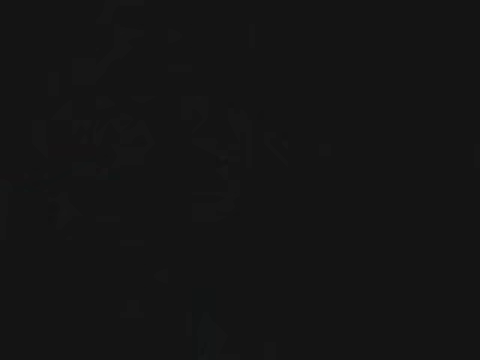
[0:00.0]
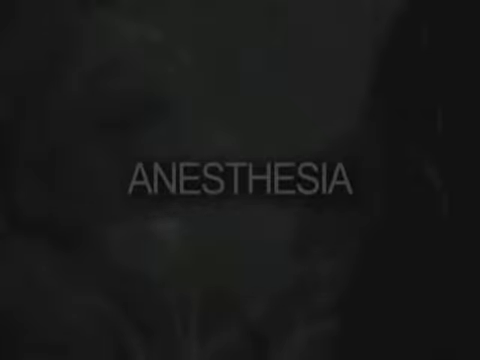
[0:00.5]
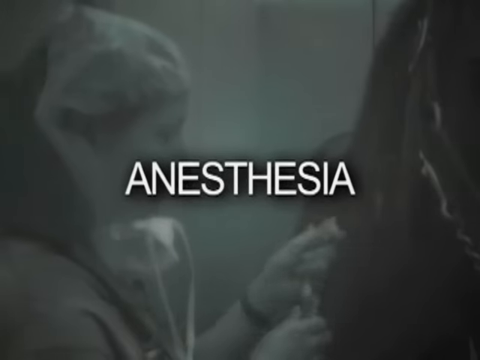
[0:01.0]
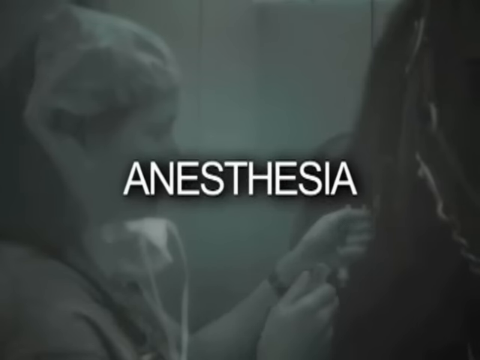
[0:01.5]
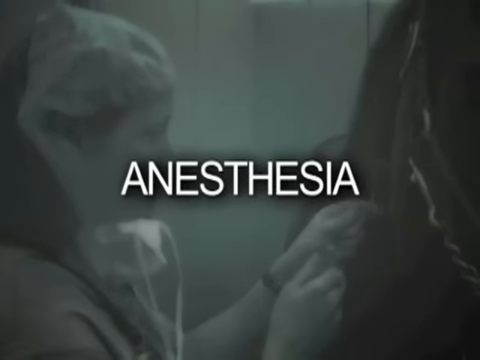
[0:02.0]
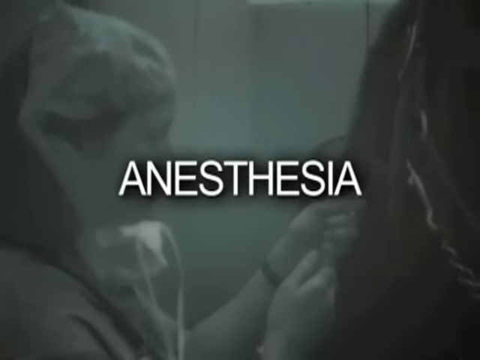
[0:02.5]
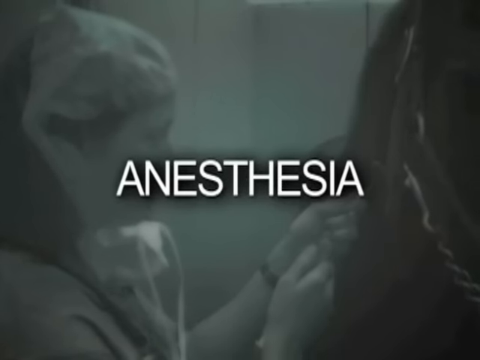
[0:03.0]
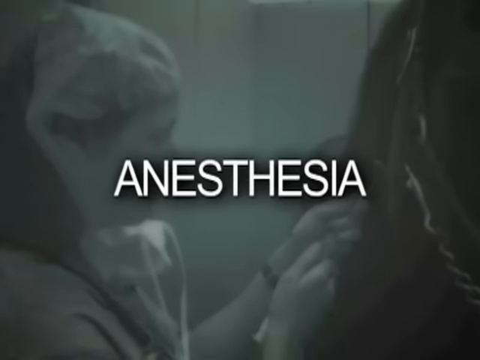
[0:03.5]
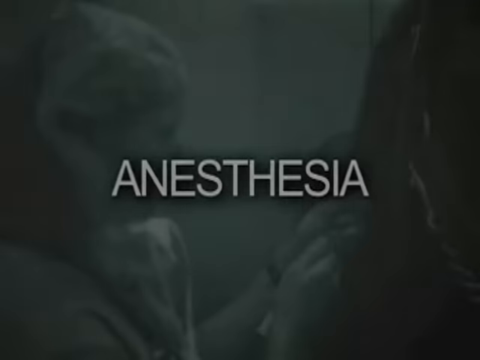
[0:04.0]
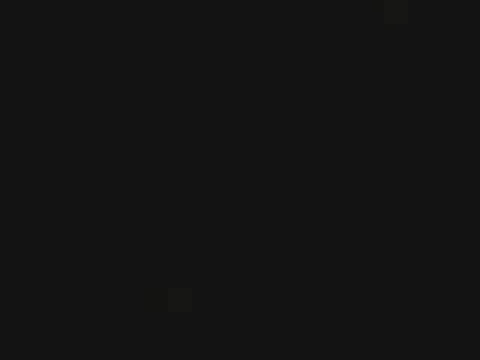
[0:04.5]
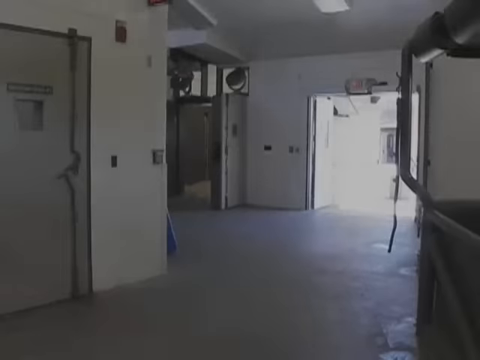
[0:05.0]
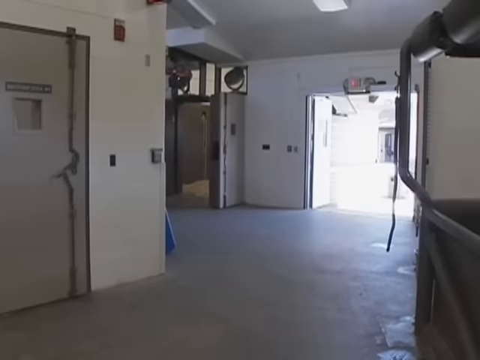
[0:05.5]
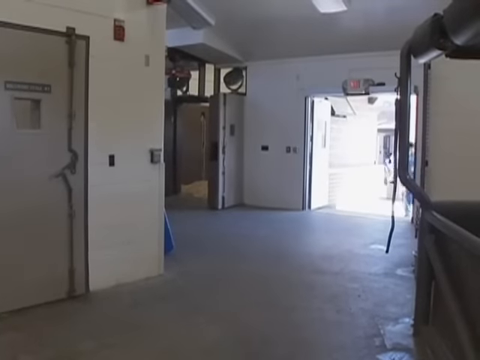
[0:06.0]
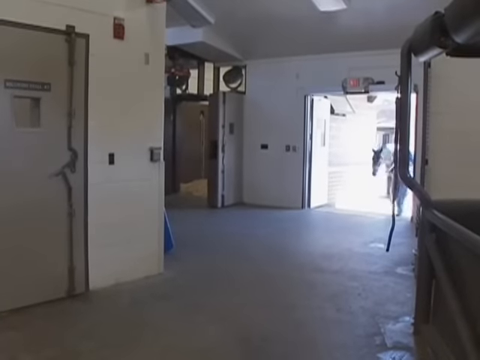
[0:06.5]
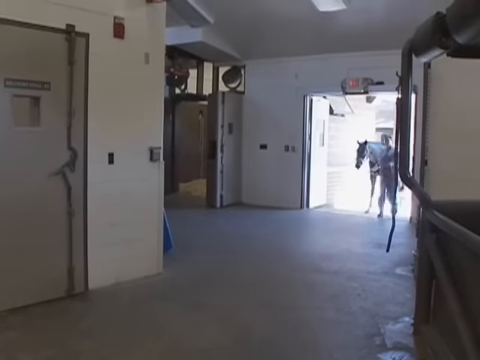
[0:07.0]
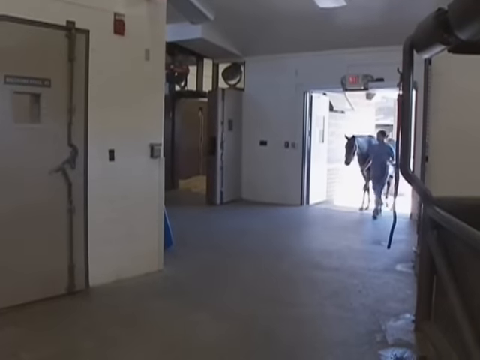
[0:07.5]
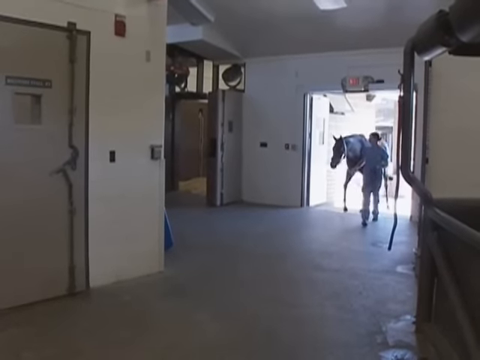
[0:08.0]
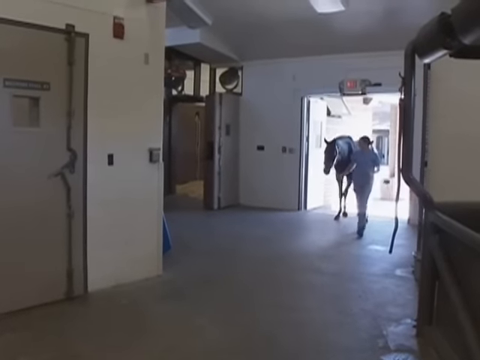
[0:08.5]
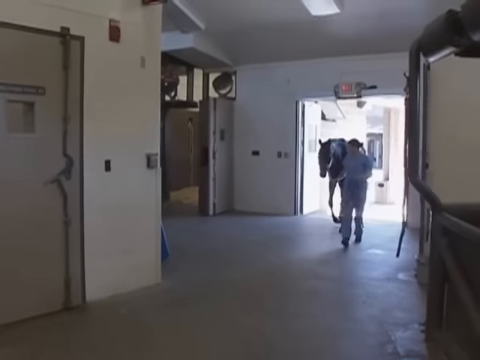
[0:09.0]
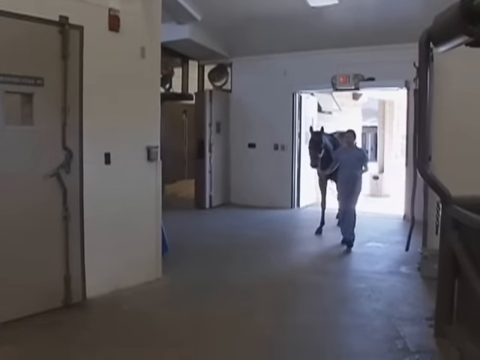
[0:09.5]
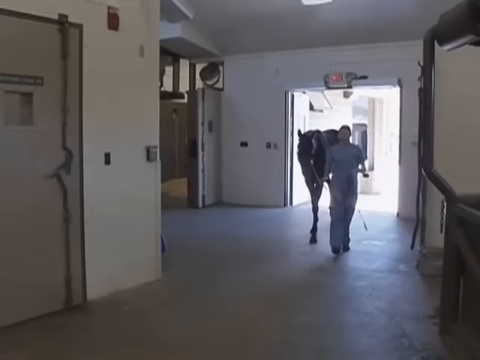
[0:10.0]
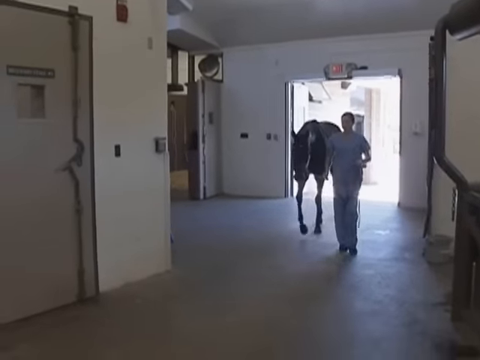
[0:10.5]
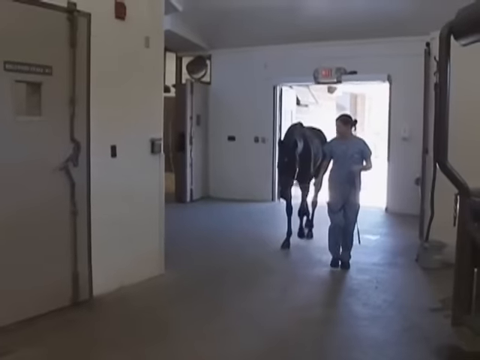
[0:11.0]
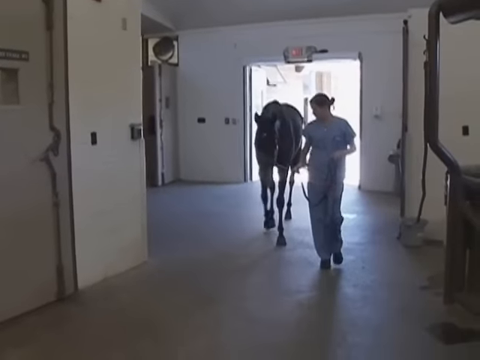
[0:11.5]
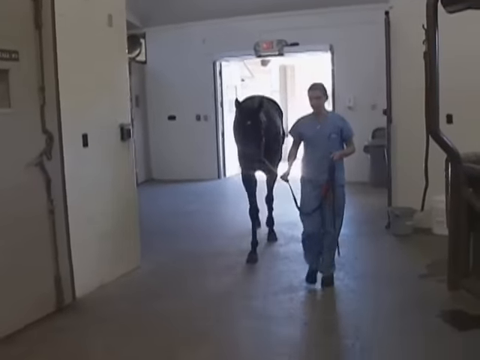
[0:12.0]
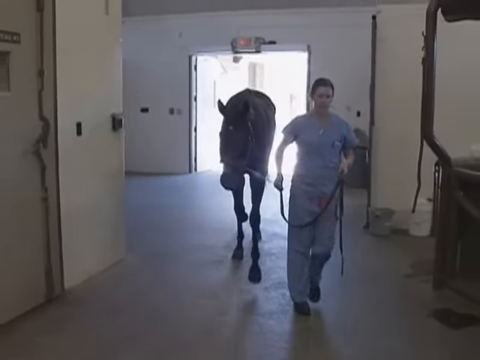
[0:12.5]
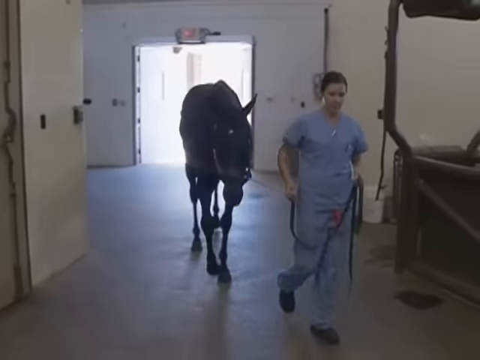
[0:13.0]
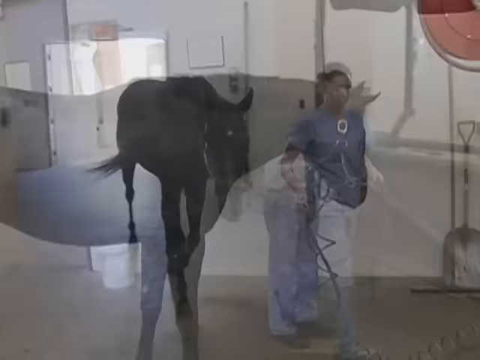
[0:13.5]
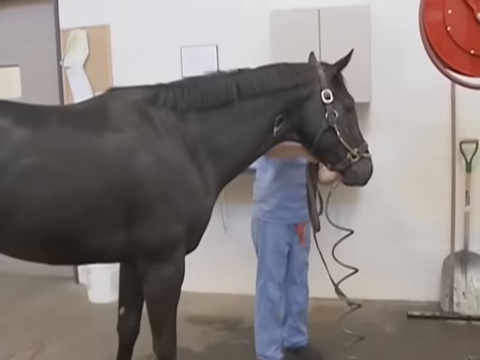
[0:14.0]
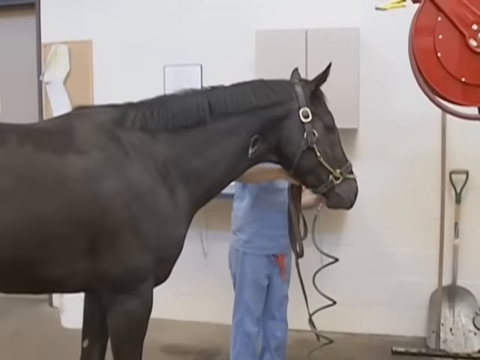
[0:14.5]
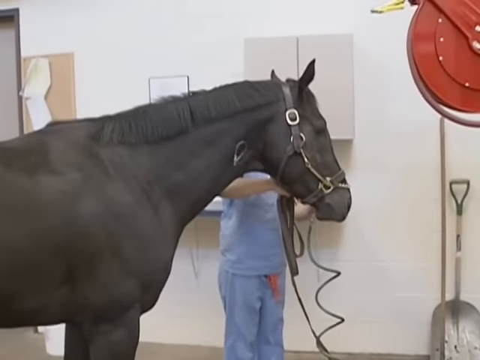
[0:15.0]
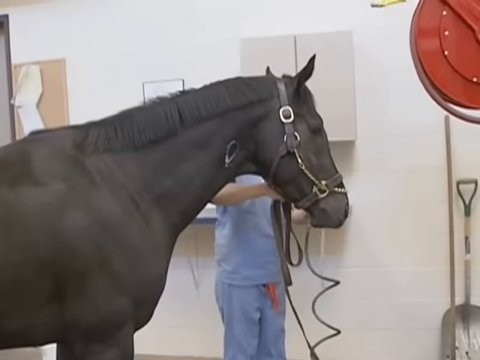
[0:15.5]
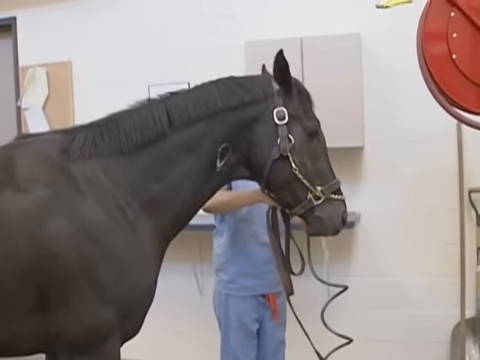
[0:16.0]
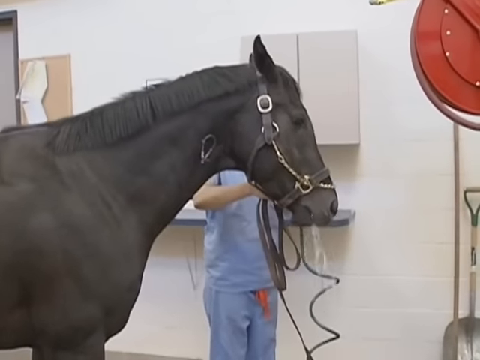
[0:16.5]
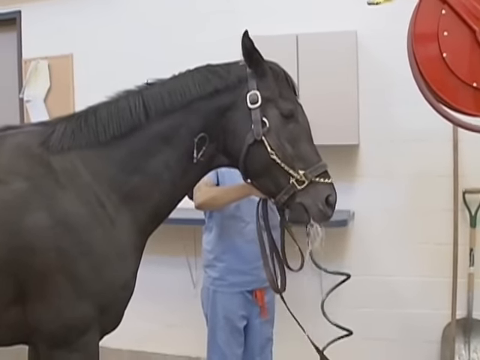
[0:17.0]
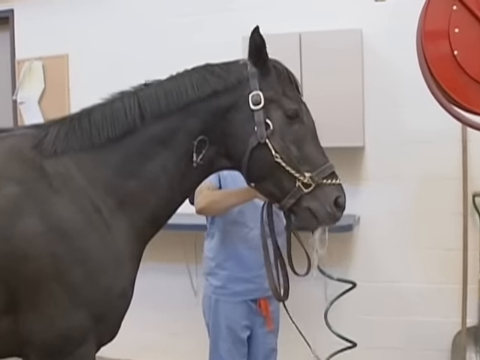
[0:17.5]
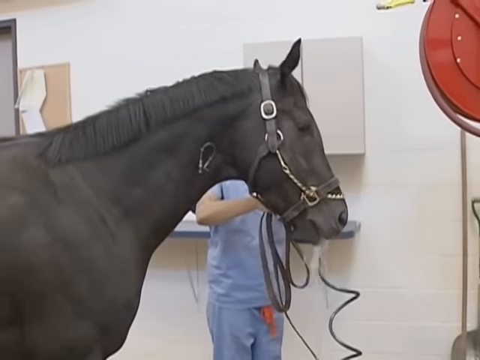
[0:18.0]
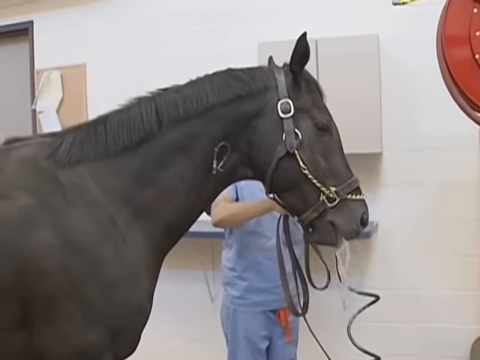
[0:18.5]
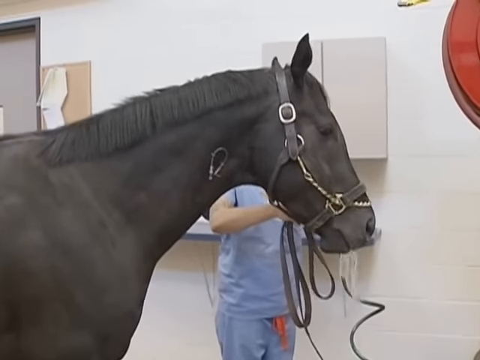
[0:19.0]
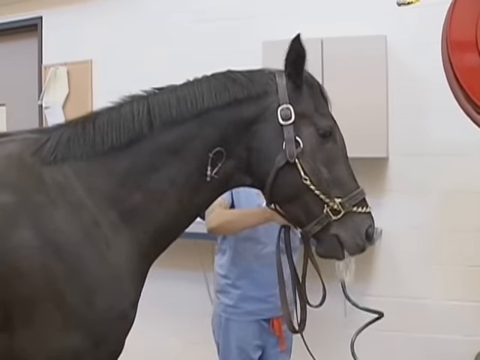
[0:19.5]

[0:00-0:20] The video opens on an out-of-focus image of what looks to be a veterinary professional interacting with a horse, with a title screen in white lettering that says "anesthesia". The scene moves to the interior of a building, apparently some sort of veterinary clinic or equine hospital, with very high ceilings and very wide hallways. What looks to be a veterinarian or veterinary assistant walks in through a large door with a horse; she wears light blue scrubs and leads the horse by a leash. The horse is then in a bright white room, where she appears to be using a hose to rinse out the horse's mouth, and the horse seems to be drinking from the hose.